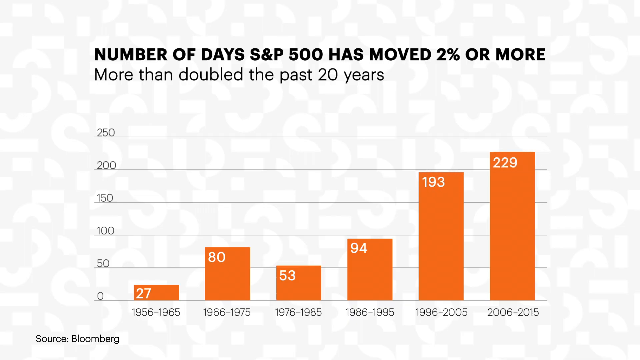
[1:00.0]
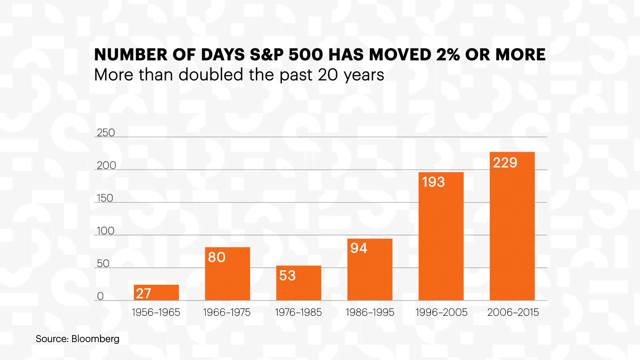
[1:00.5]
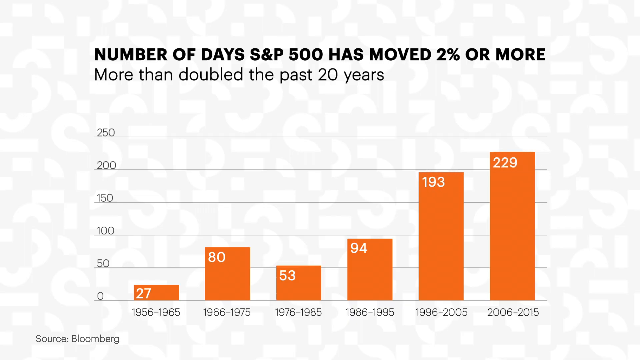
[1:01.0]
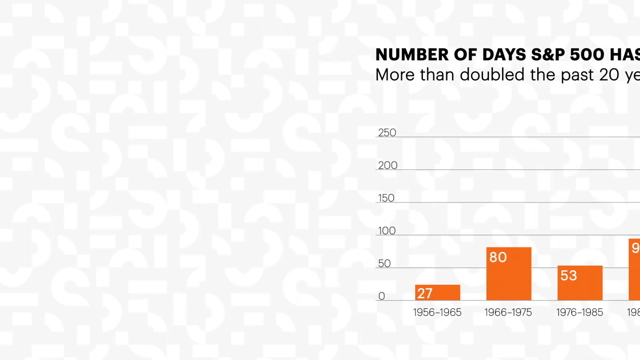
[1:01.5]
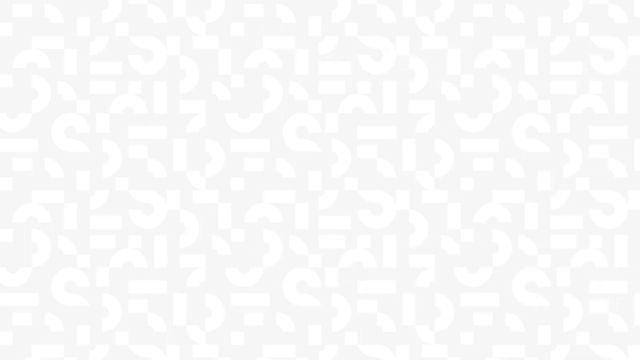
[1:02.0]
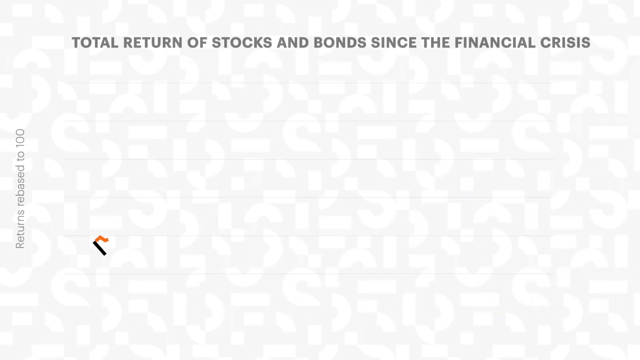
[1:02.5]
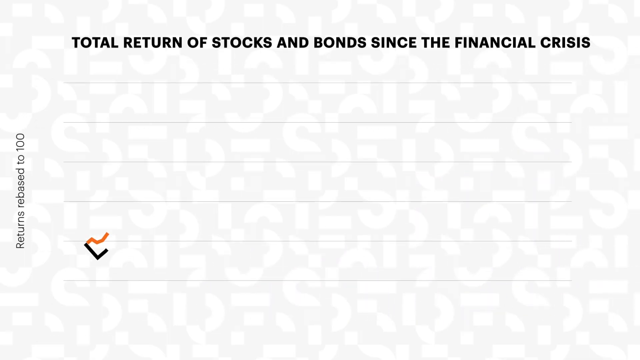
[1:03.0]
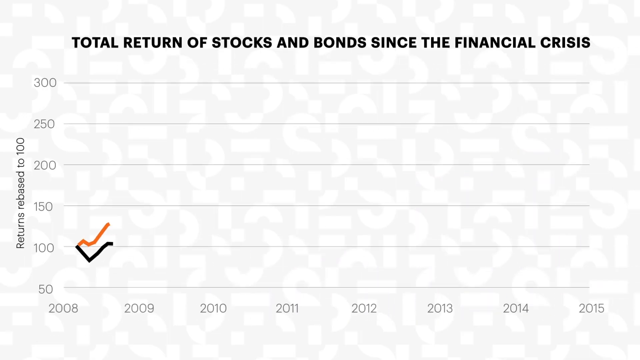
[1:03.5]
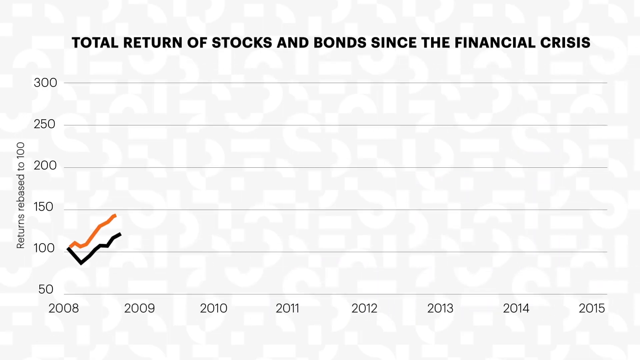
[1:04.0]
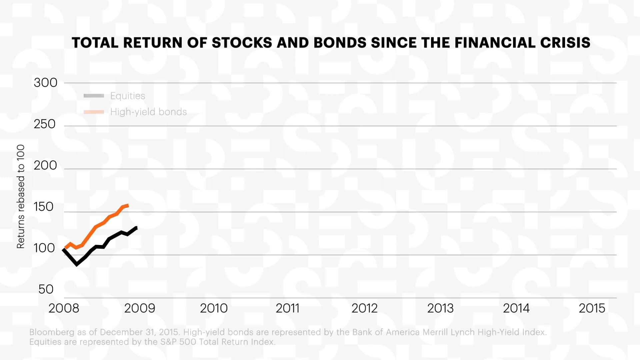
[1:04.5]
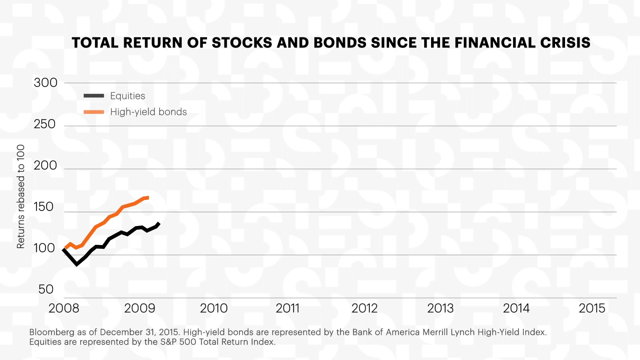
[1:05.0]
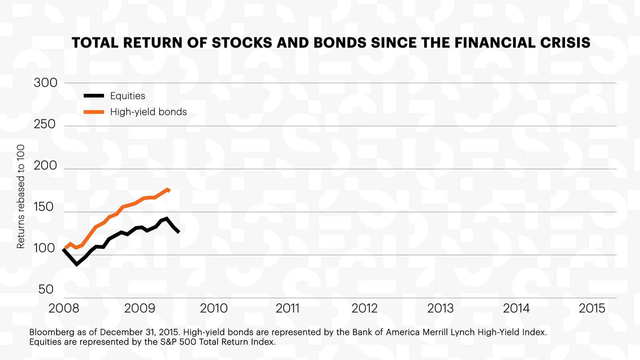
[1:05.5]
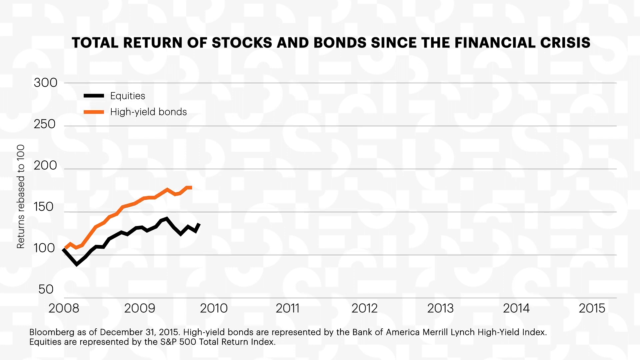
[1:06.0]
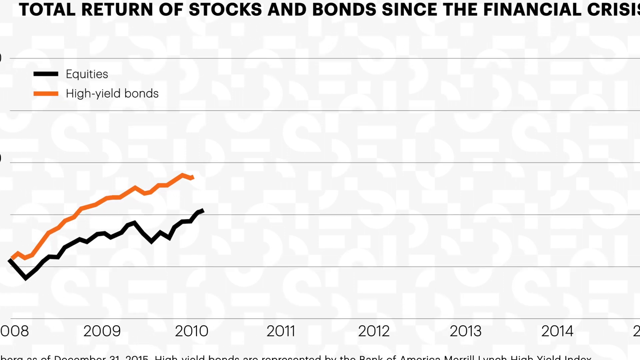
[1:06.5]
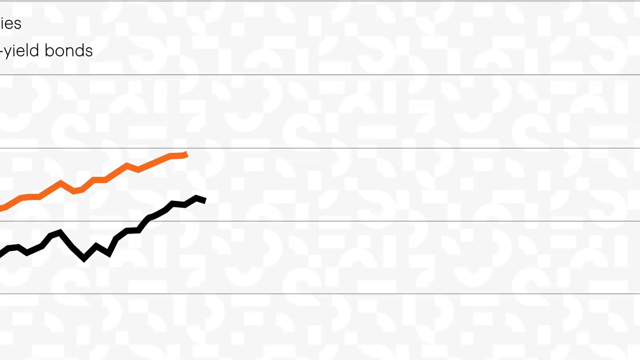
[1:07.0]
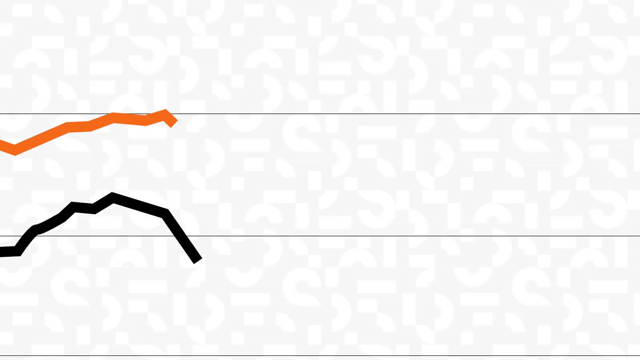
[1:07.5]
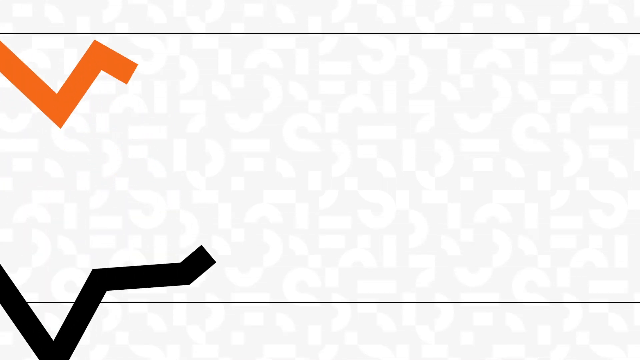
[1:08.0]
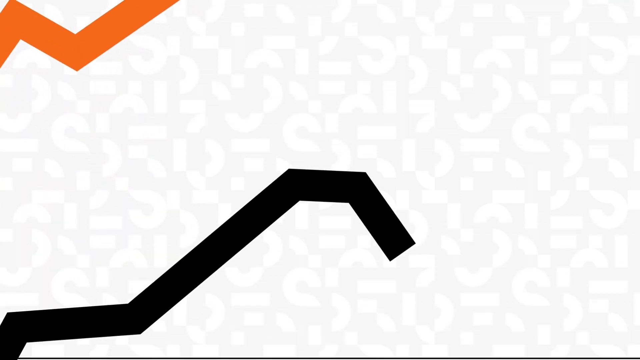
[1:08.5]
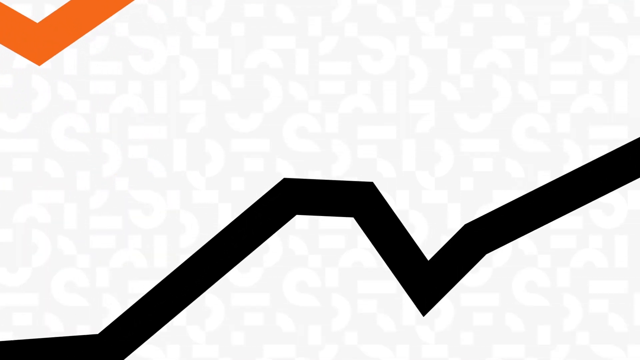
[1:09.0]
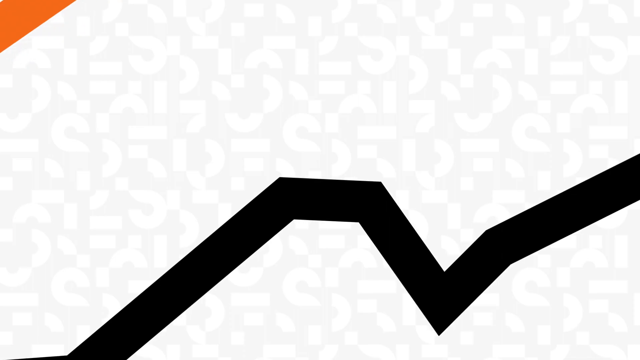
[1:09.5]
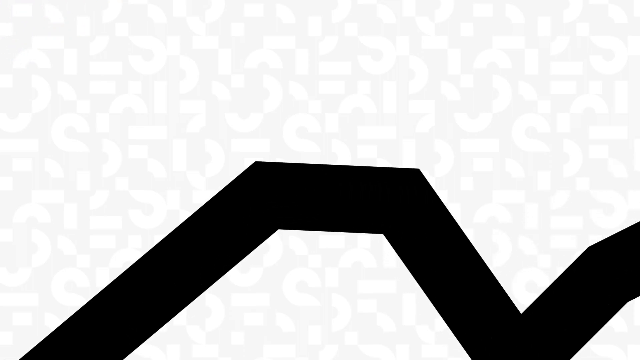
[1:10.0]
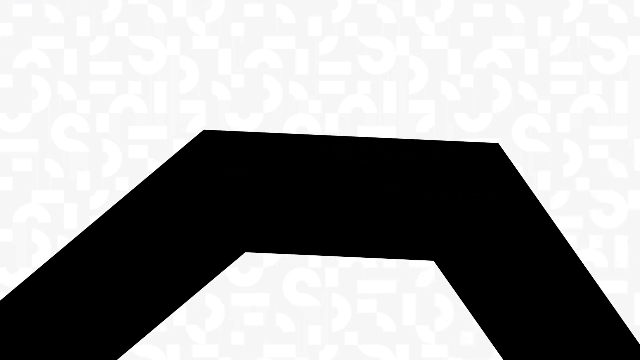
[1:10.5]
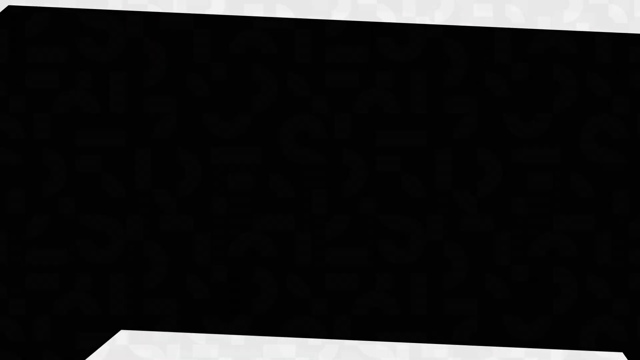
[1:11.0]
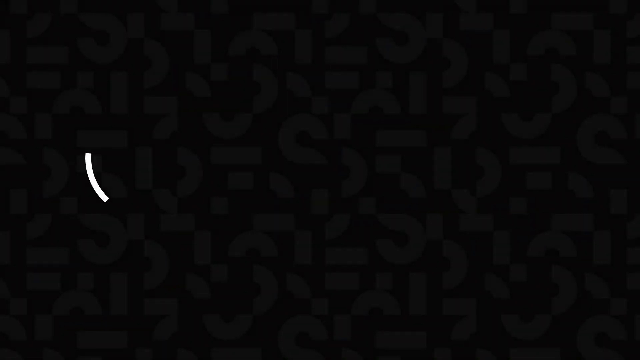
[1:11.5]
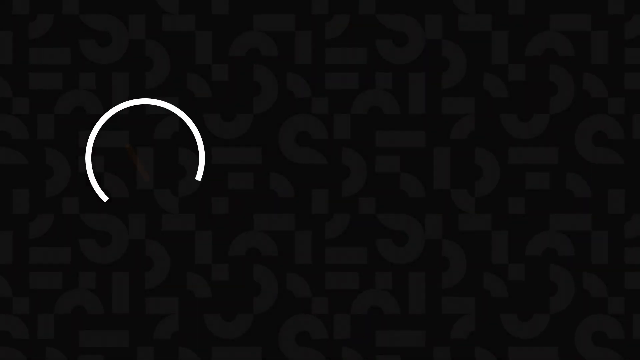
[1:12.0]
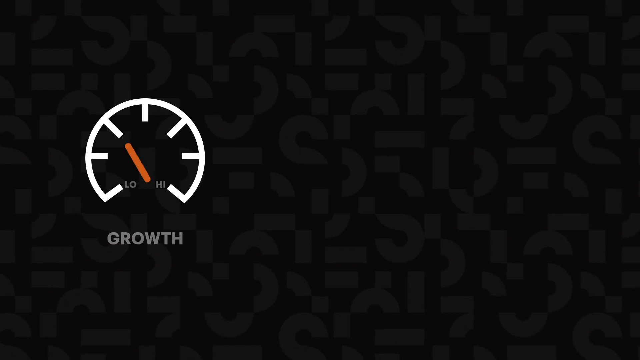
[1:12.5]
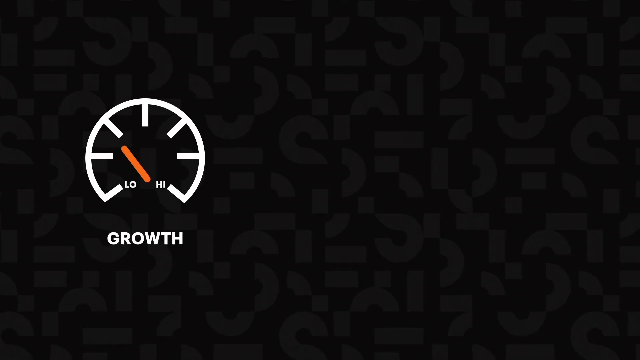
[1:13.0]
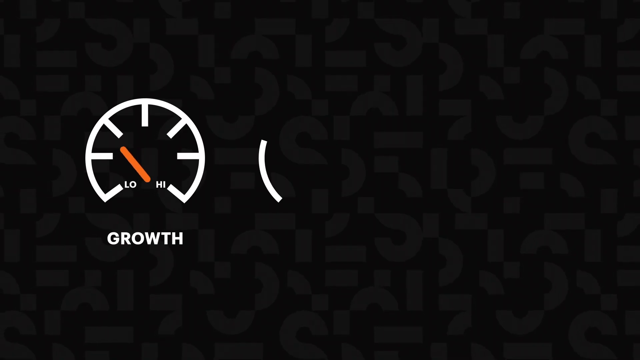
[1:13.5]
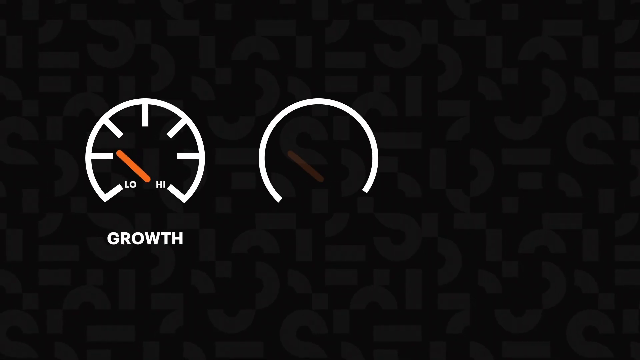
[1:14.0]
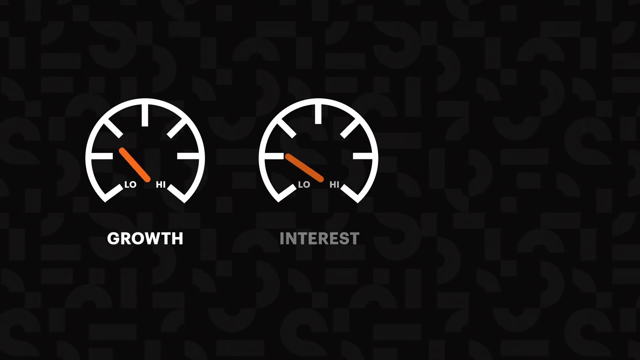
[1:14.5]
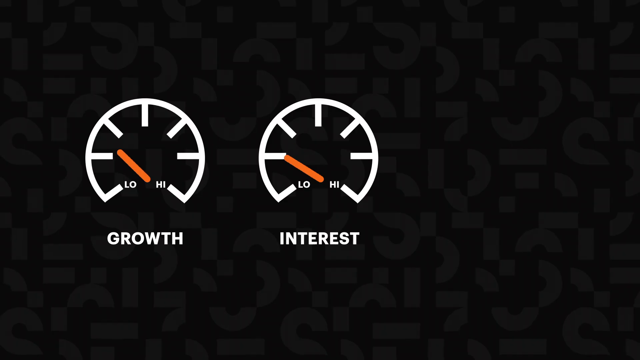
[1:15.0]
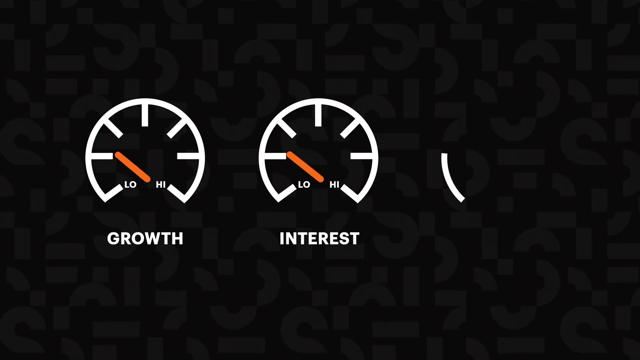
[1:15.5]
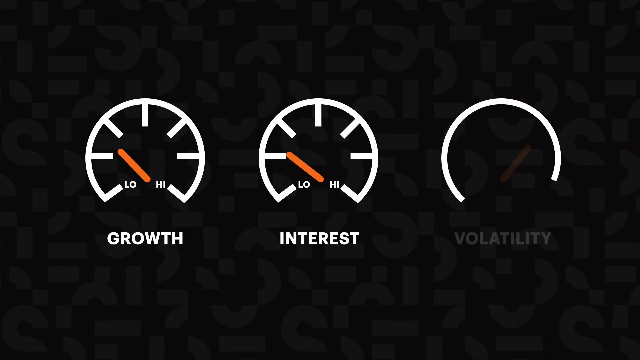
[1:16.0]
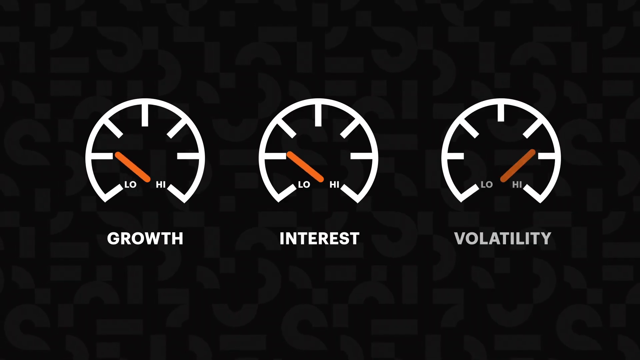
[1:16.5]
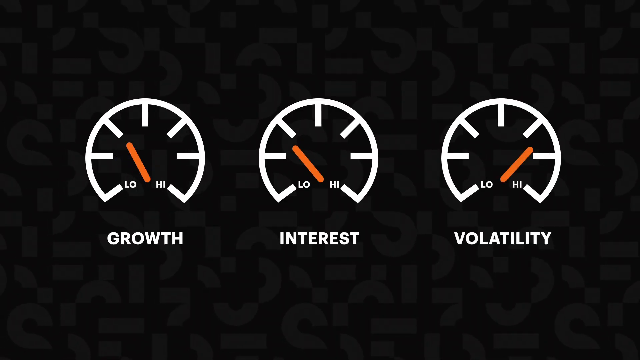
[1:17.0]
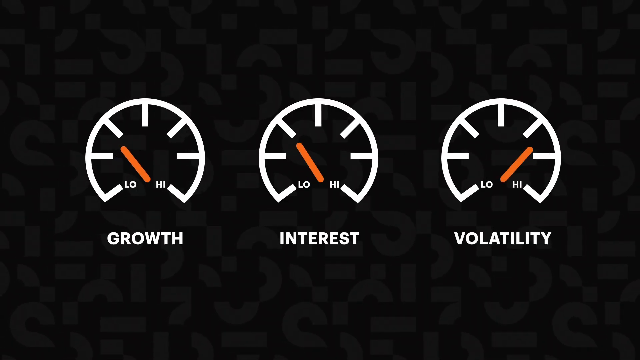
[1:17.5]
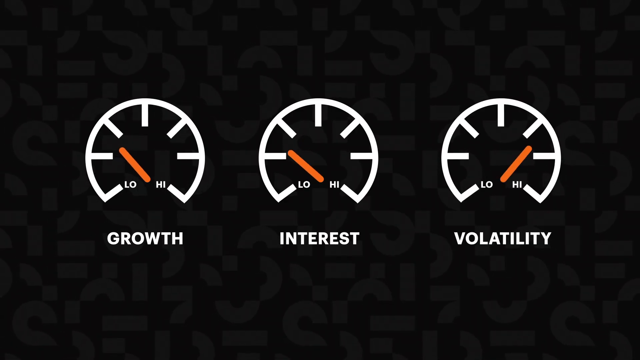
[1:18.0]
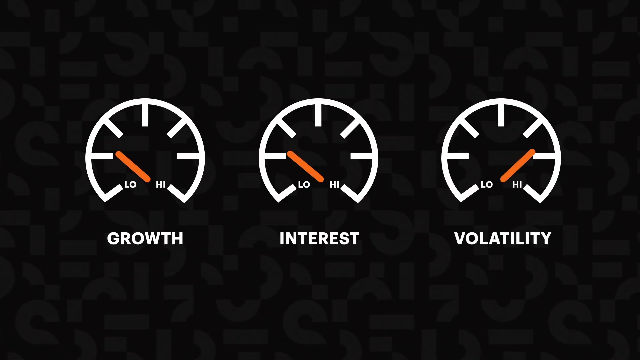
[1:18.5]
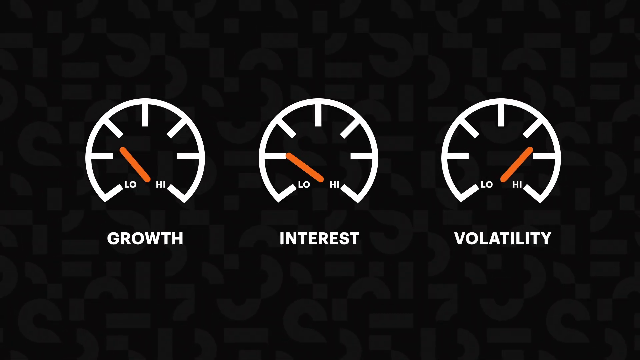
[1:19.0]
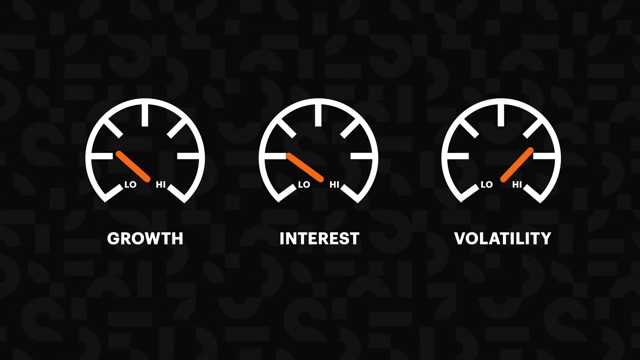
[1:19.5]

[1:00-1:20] A bar graph on a white background has orange bars, each with a white number in its top left corner, a year range underneath, and a scale from zero to 250. Black all-caps text at the top reads "number of days S&P 500 has moved 2% or more," and beneath it black text in regular capitalization reads "more than double the past 20 years." The screen changes to a line graph, with an animation of black and orange lines moving across it, going up and down, and the view zooms in on one of the black lines. A circle appears and becomes what looks like an odometer, with "low" and "high" marked inside and a little orange dial pointing to the left; "growth" is written underneath in white text. A second odometer appears with "interest" underneath in white all-caps text, and a third appears labeled "volatility," its dial pointing to the right. The dials kind of push back and forth a little. This section is on the background of pieces of the letter S scattered in a disorganized pattern, in kind of a dark gray on a darker gray background, and the white odometers stand out against it.